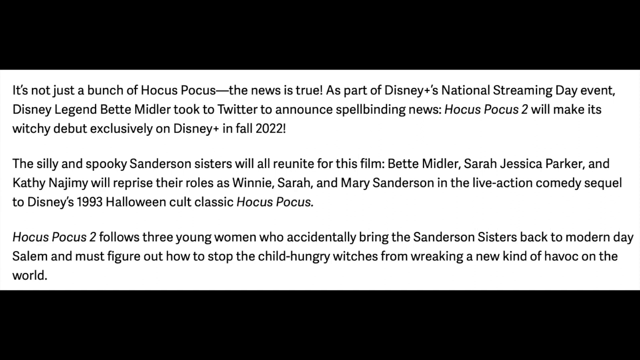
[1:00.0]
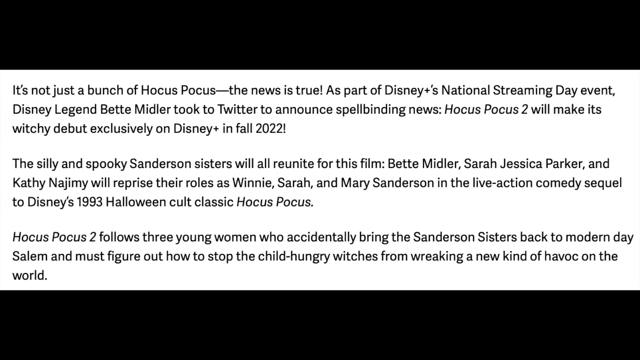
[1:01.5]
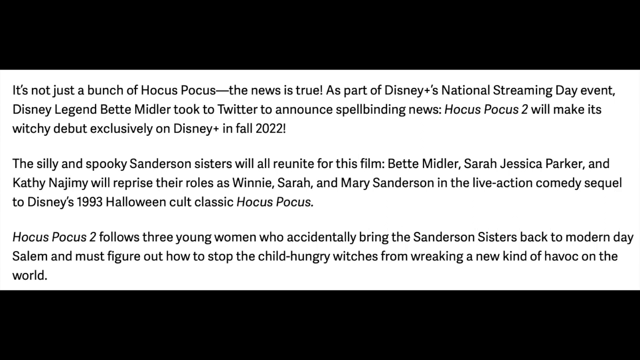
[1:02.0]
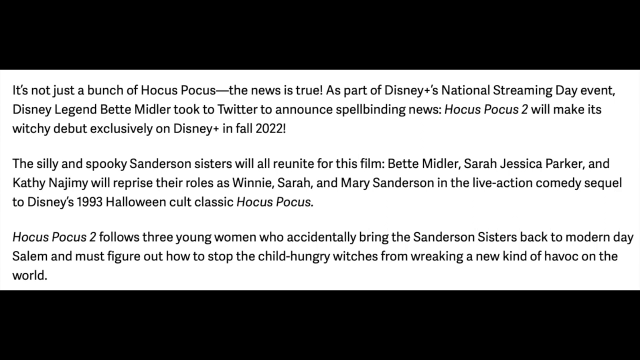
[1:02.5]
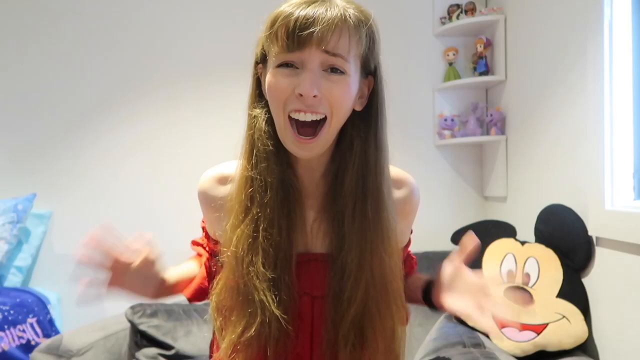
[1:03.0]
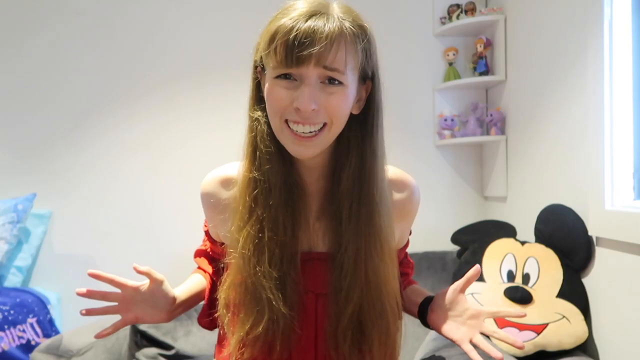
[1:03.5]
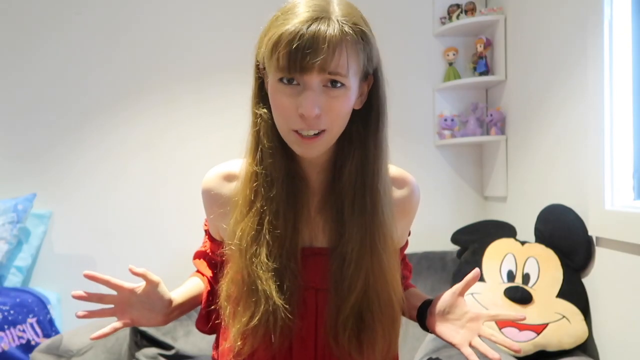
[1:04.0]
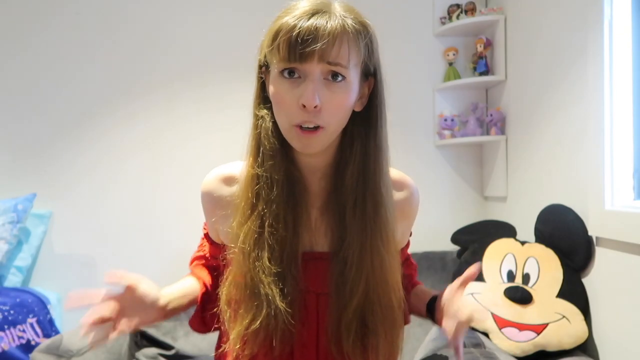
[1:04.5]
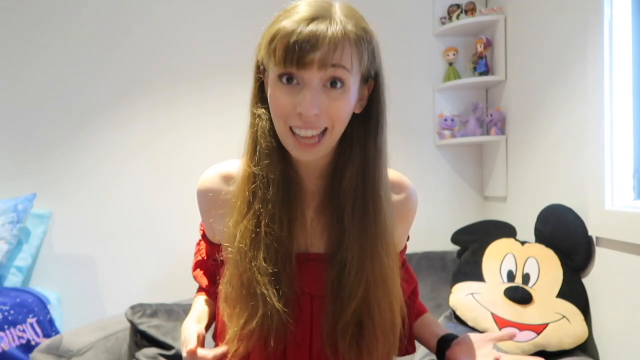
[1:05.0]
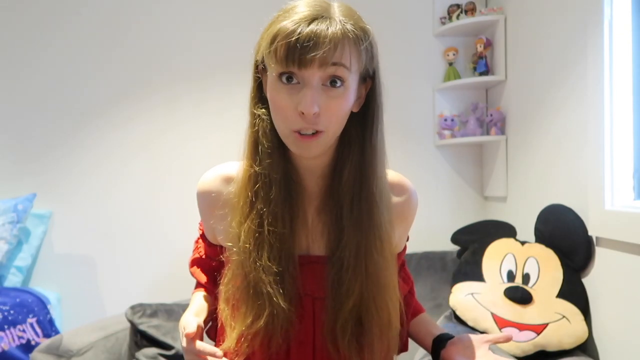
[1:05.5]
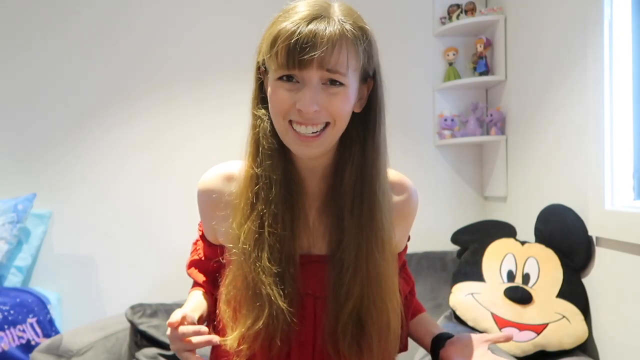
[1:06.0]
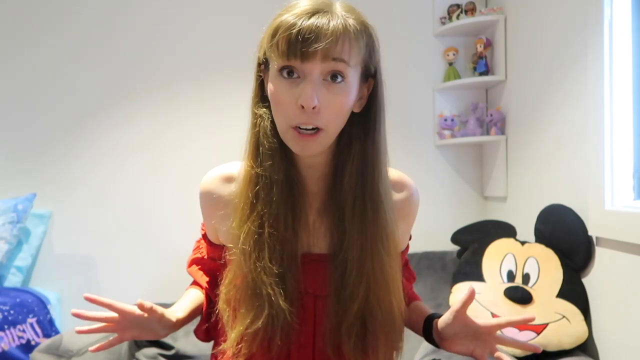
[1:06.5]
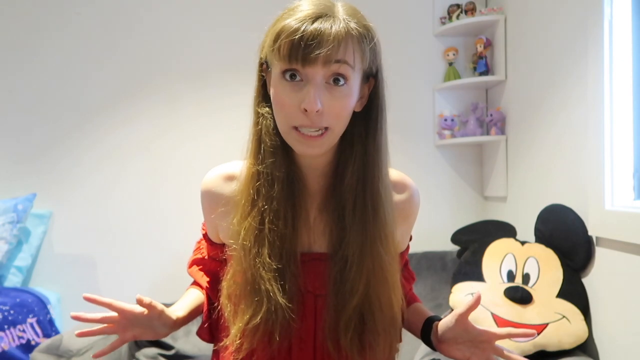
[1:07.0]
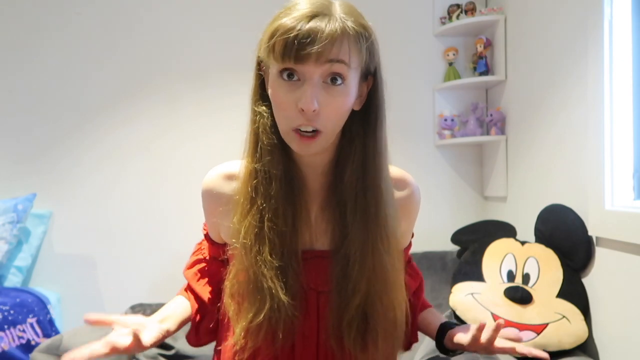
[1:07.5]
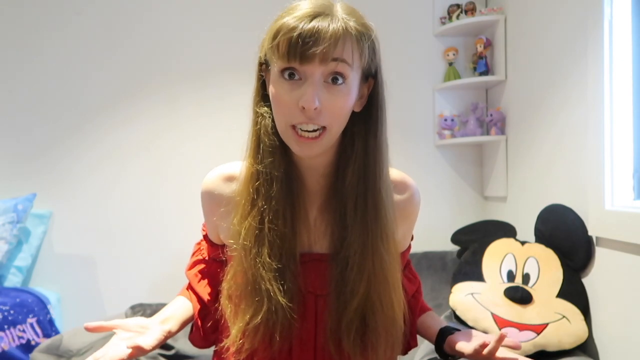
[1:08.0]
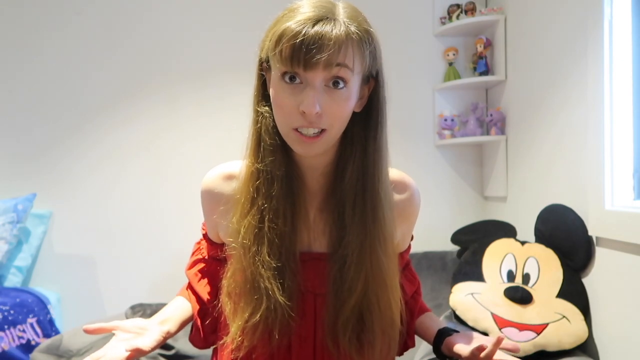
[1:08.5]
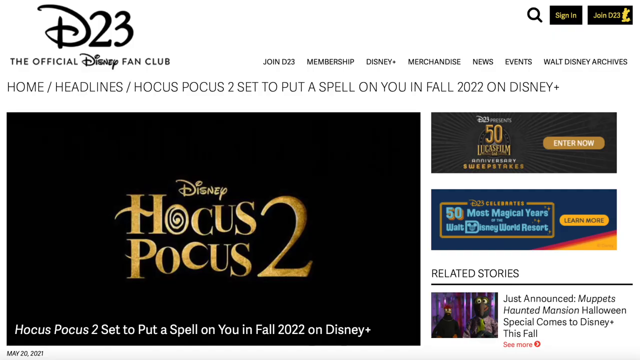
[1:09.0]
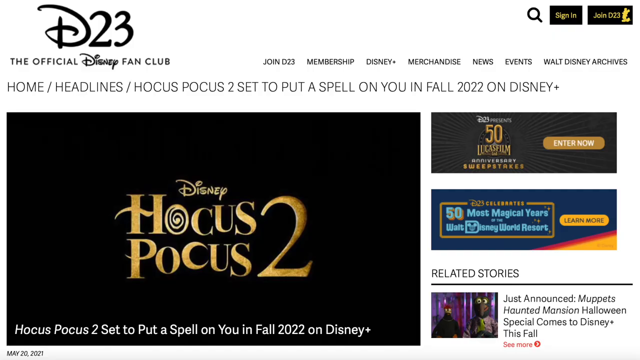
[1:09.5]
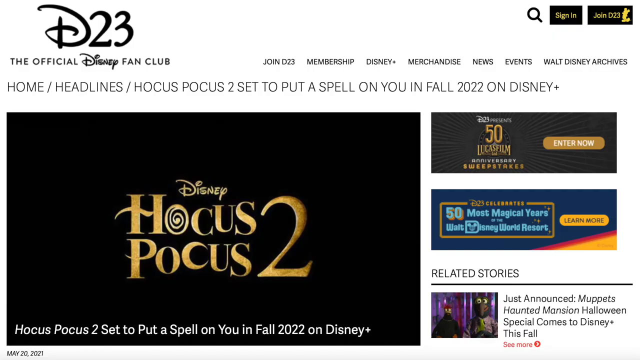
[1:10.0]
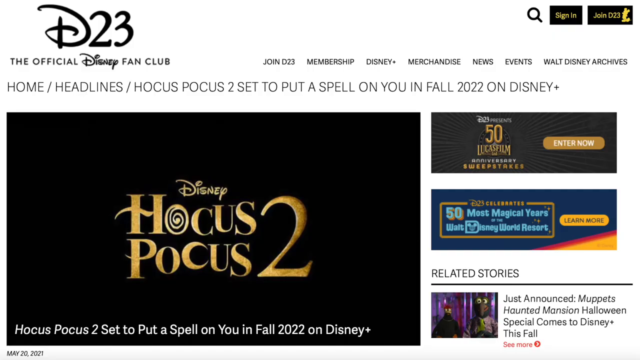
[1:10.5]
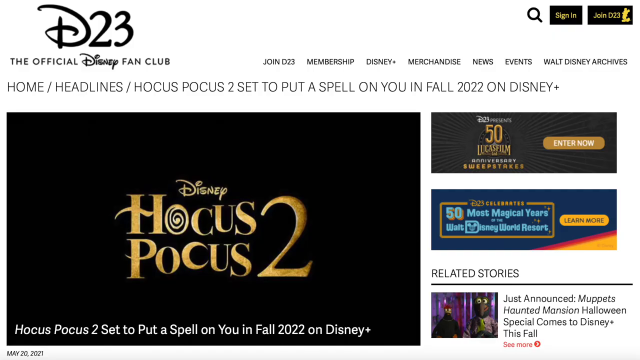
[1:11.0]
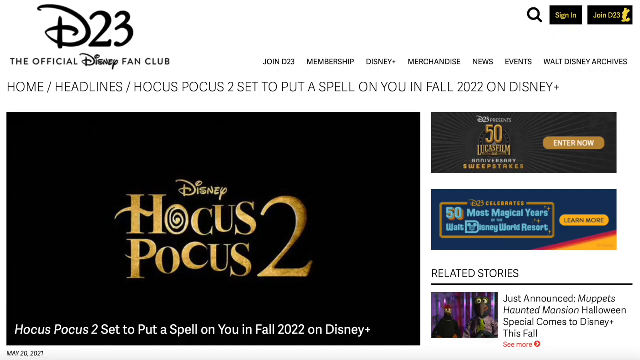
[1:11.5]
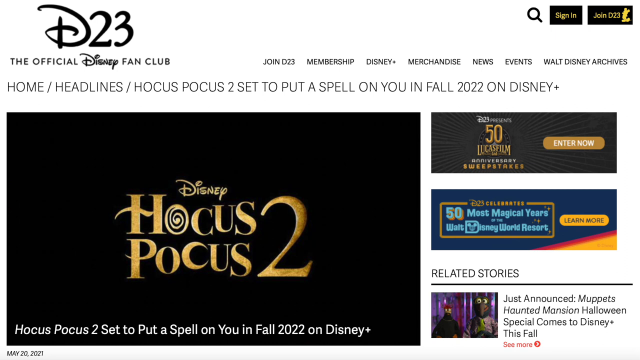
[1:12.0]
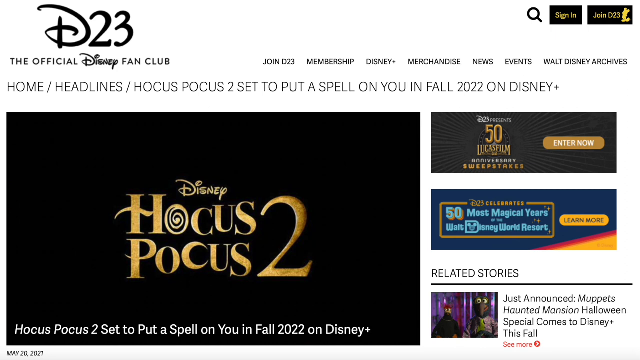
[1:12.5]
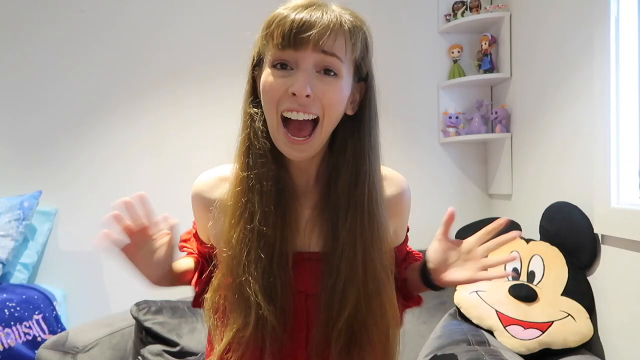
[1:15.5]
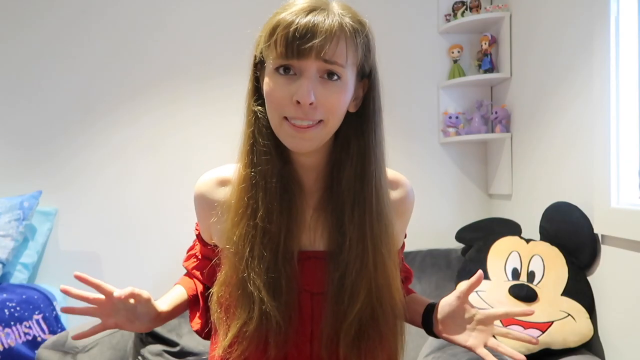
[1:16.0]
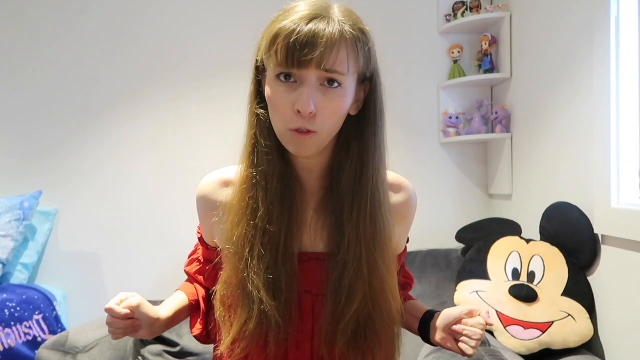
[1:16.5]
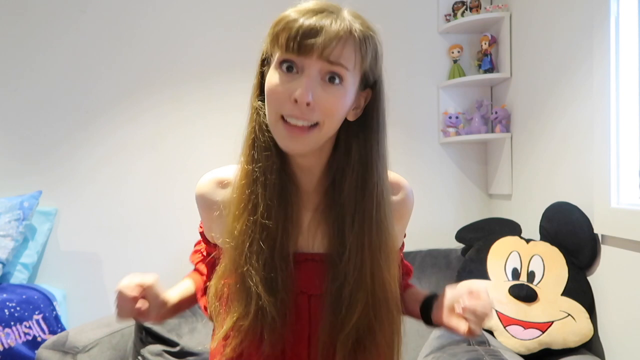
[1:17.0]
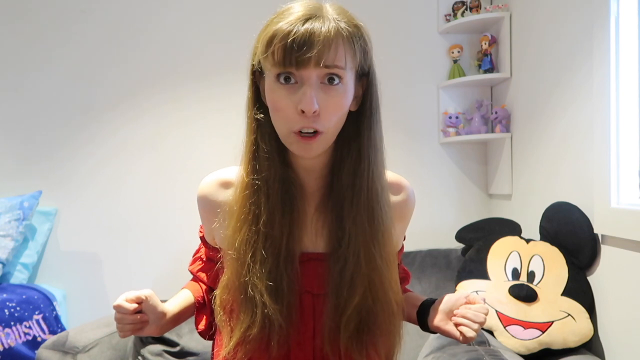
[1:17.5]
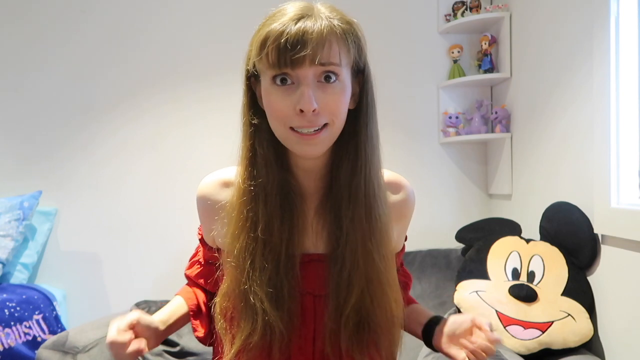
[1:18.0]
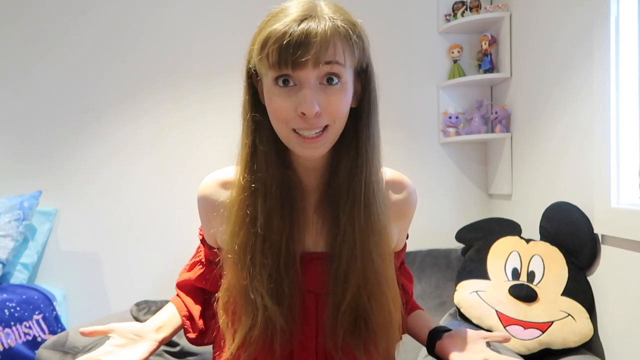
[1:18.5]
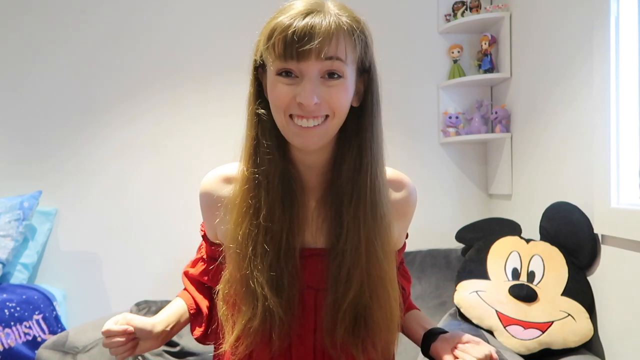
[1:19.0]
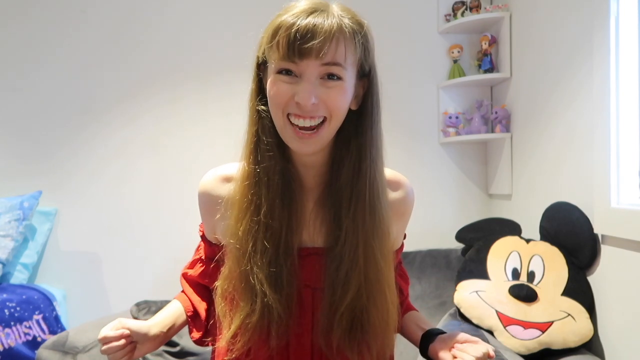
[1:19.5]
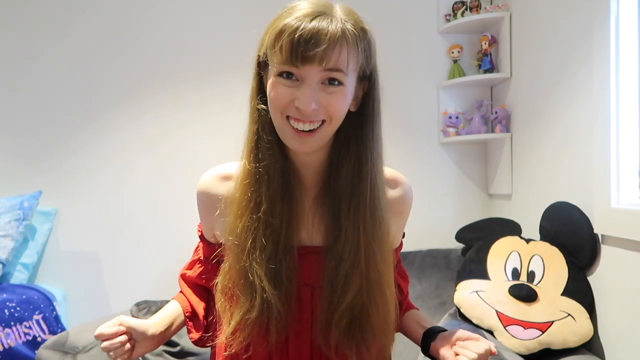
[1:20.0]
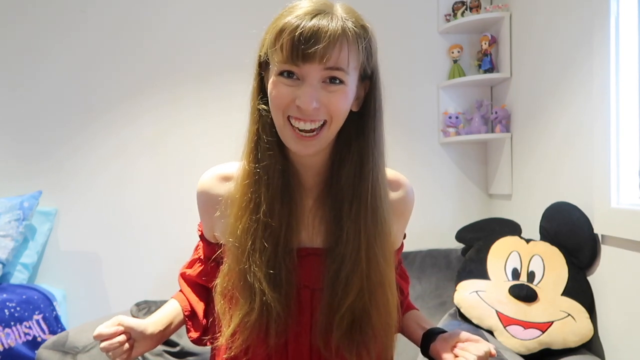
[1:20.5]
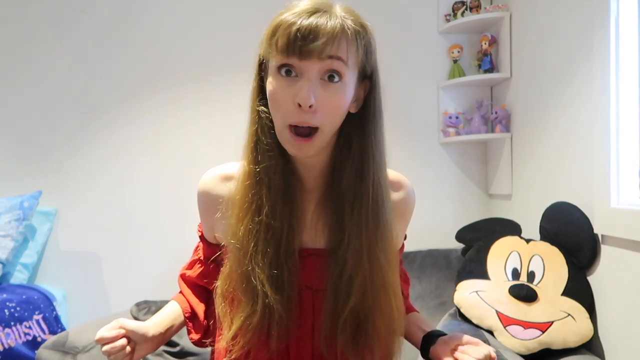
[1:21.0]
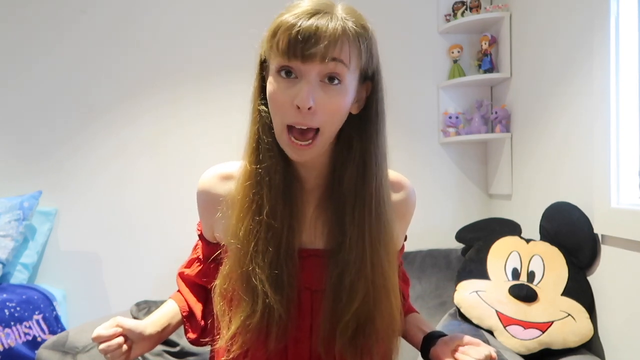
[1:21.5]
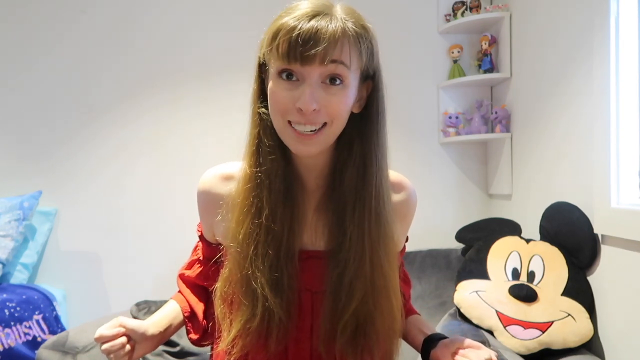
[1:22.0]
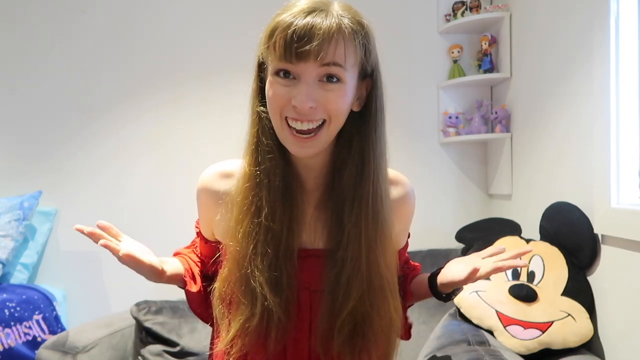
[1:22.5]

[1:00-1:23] More text about Hocus Pocus 2 is read while the young lady continues to narrate about what to expect from the new Hocus Pocus 2, which appears to be a modern-day Hocus Pocus coming in 2022. She seems fascinated and shows it to the viewers. Text reads "D23, the official Disney fan club, home of headlines Hocus Pocus 2 set to put a spell on you in fall 2022." Then a screen shows Hocus Pocus 2 set for fall 2022, along with "Disney 50," "50 most magical years" and "just announced" related stories.